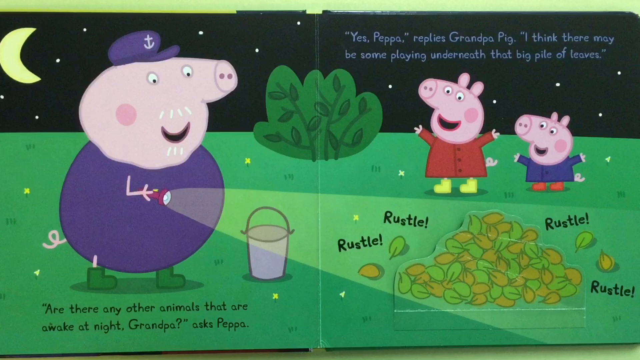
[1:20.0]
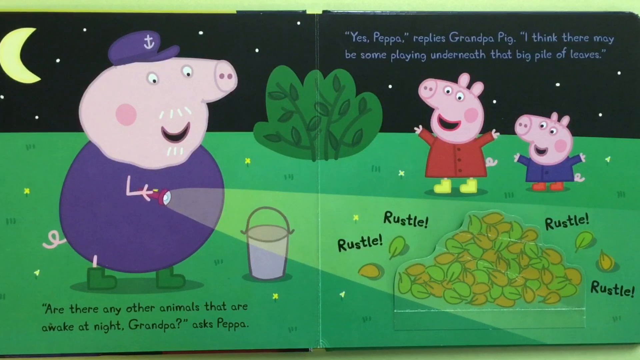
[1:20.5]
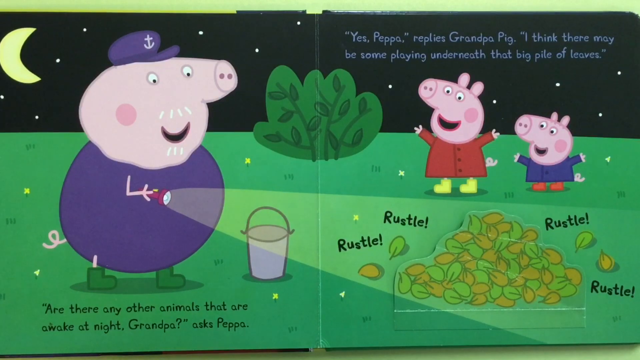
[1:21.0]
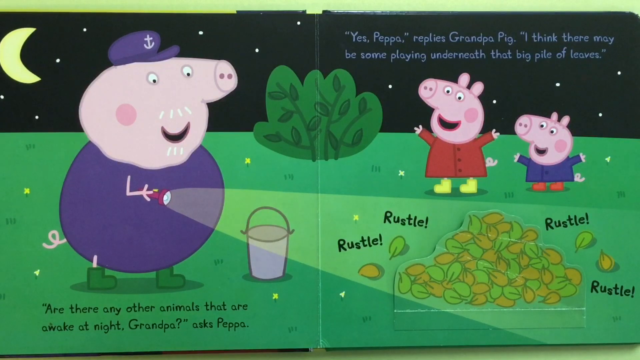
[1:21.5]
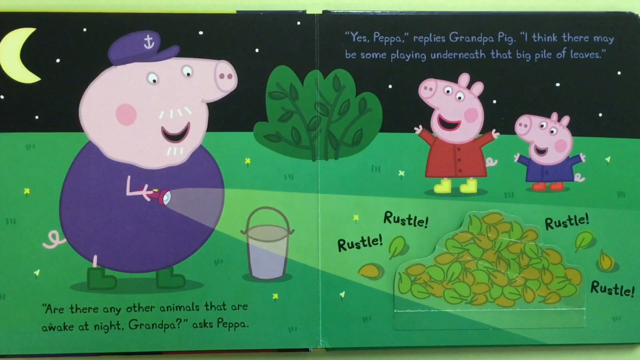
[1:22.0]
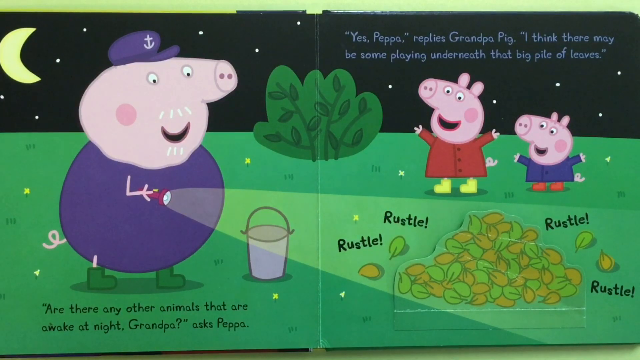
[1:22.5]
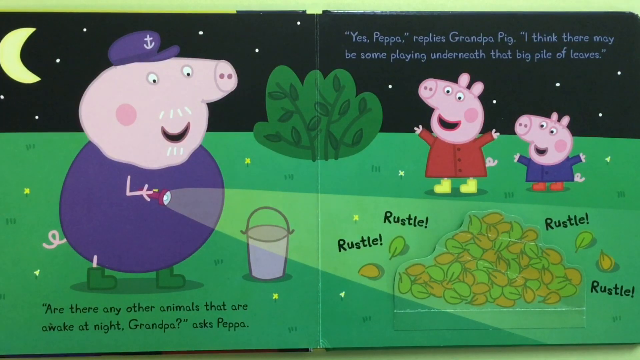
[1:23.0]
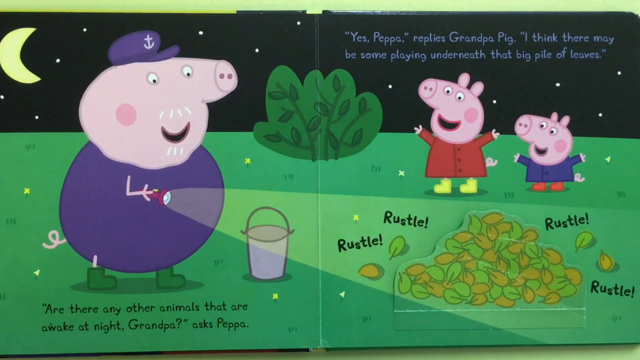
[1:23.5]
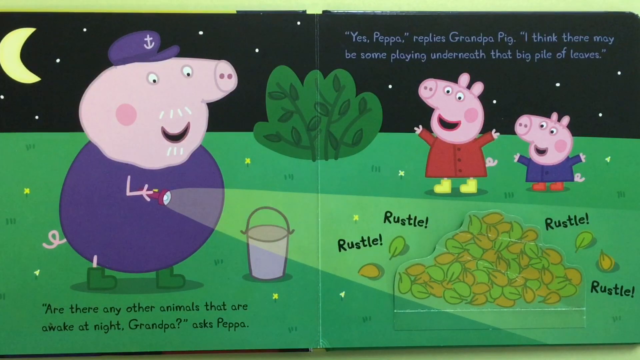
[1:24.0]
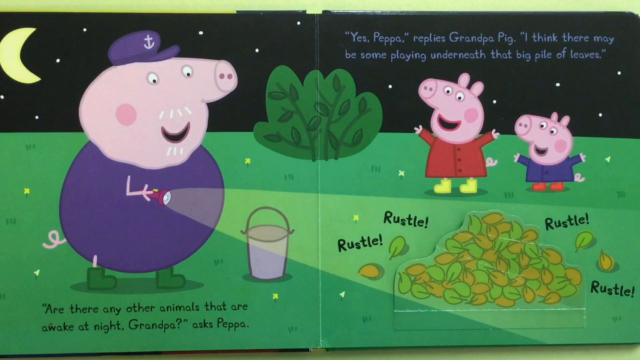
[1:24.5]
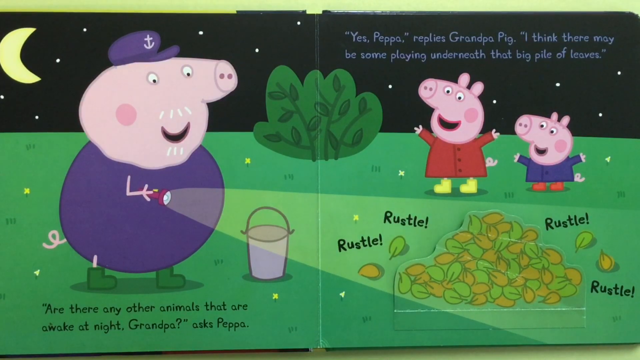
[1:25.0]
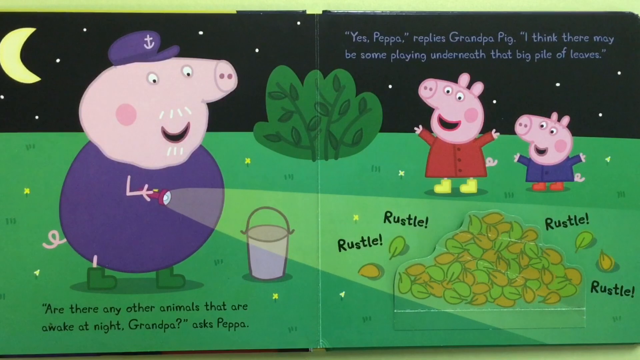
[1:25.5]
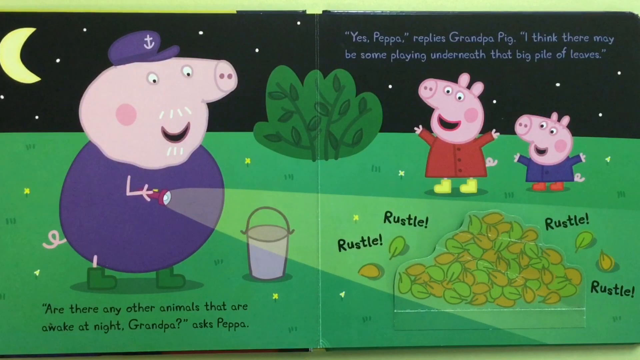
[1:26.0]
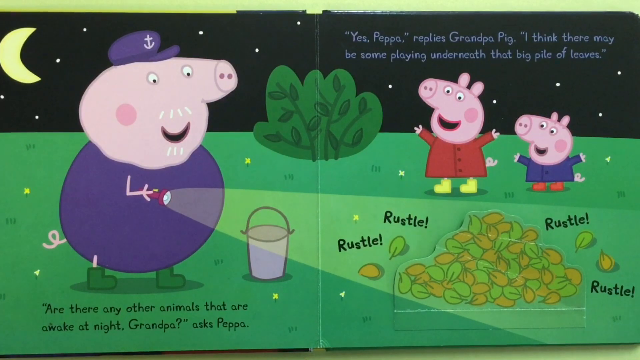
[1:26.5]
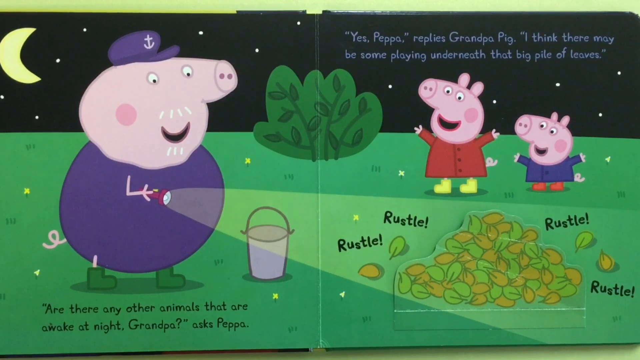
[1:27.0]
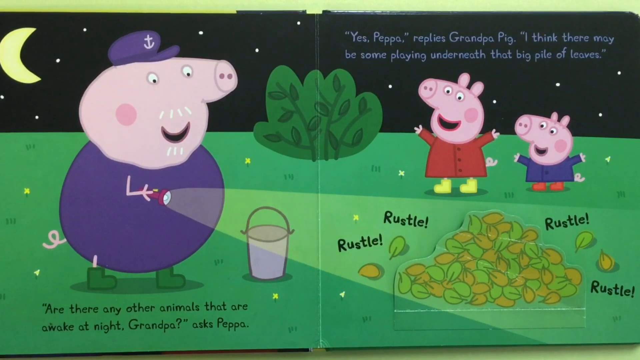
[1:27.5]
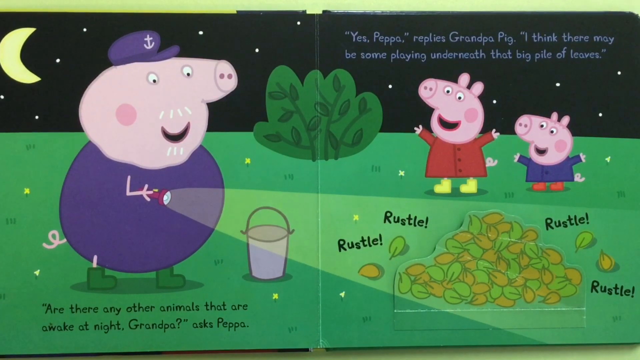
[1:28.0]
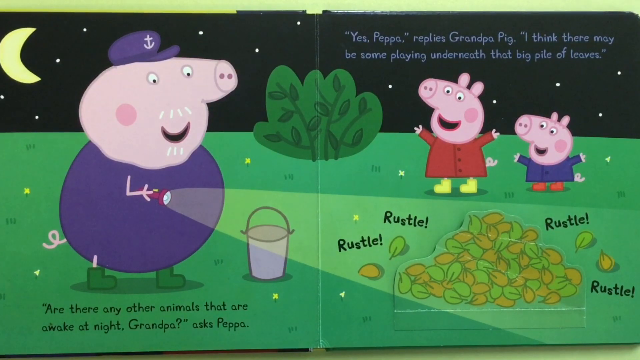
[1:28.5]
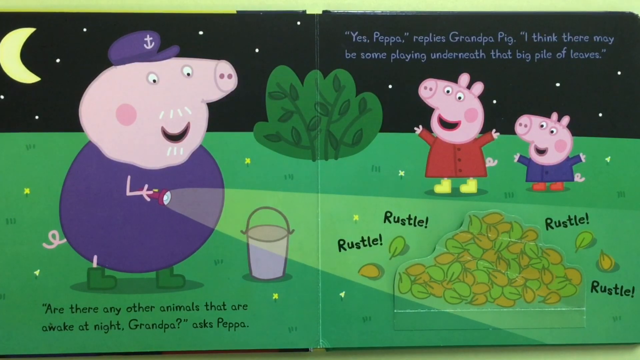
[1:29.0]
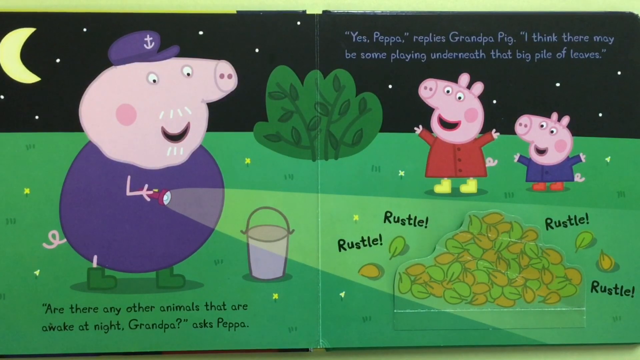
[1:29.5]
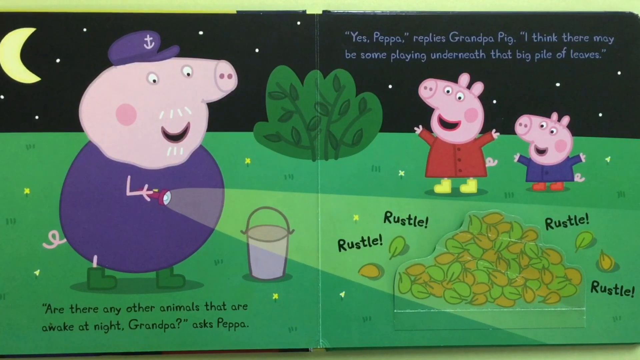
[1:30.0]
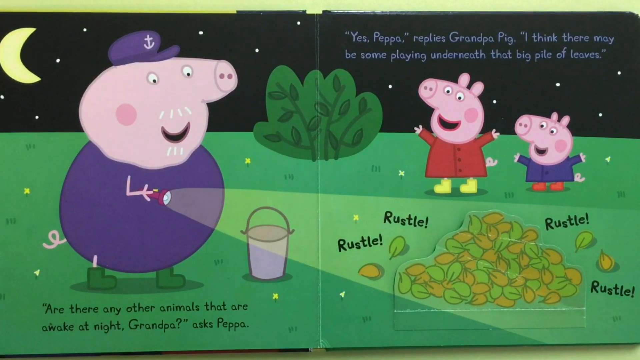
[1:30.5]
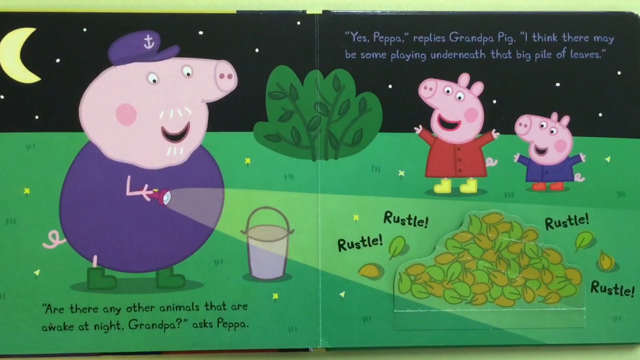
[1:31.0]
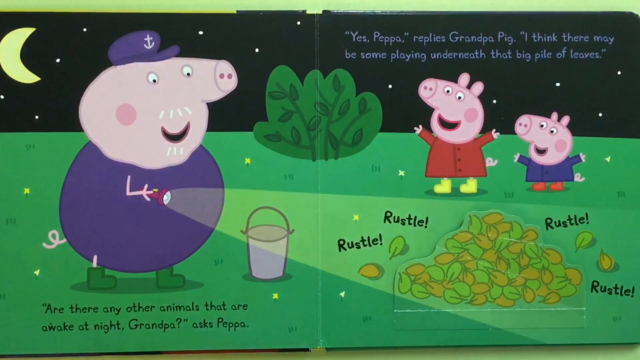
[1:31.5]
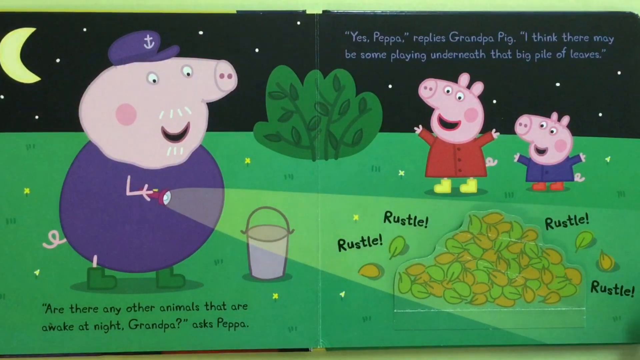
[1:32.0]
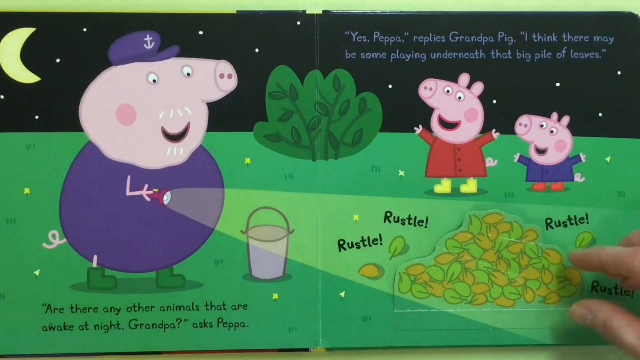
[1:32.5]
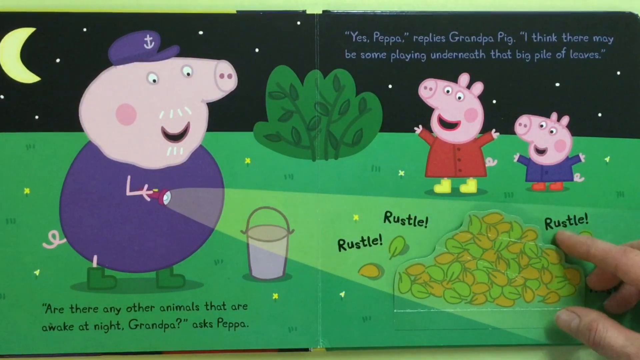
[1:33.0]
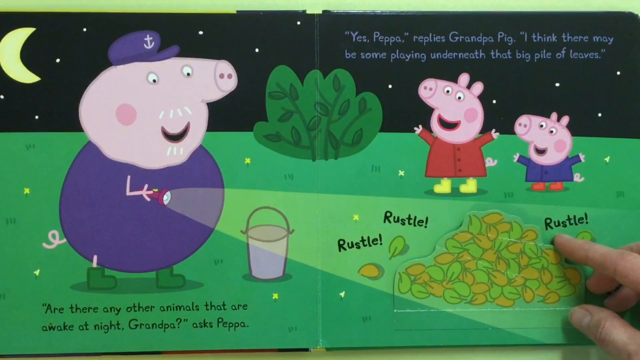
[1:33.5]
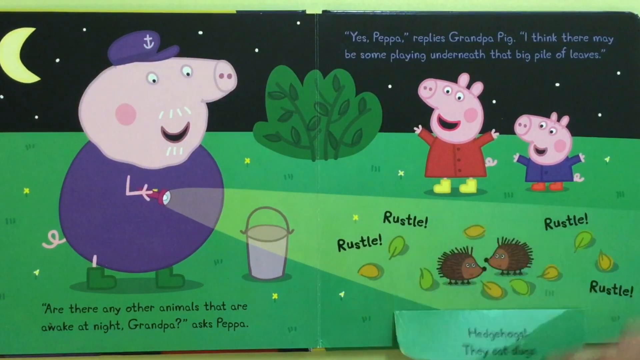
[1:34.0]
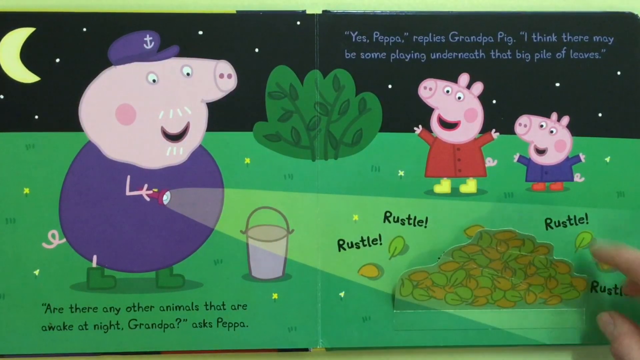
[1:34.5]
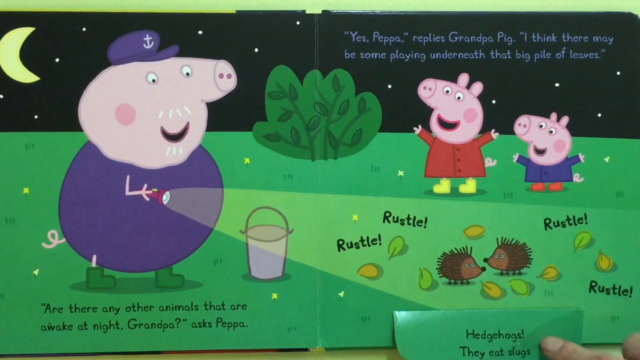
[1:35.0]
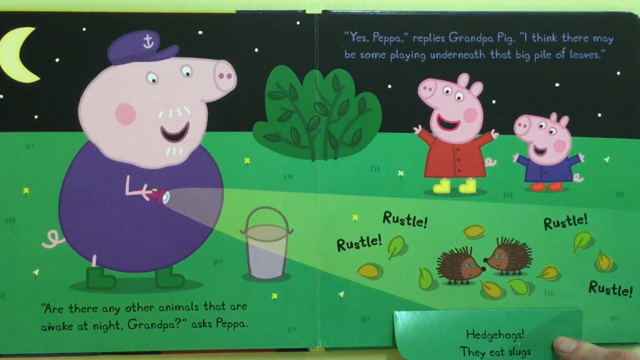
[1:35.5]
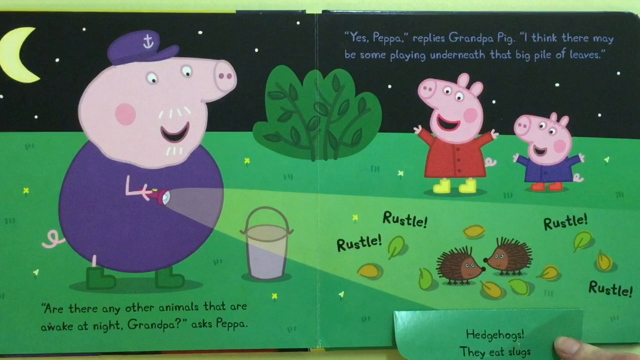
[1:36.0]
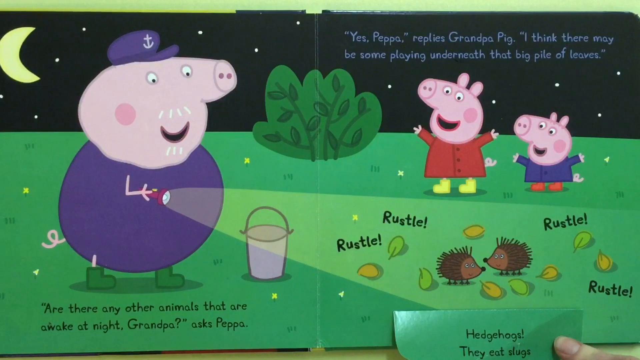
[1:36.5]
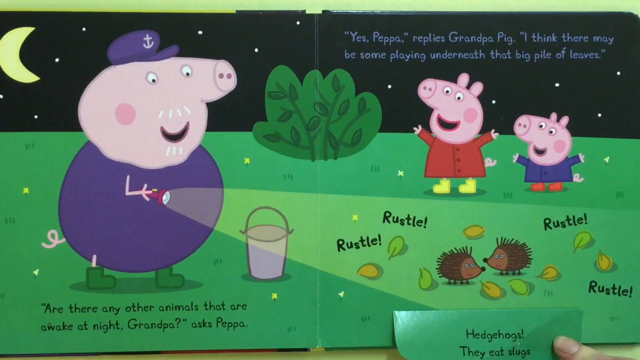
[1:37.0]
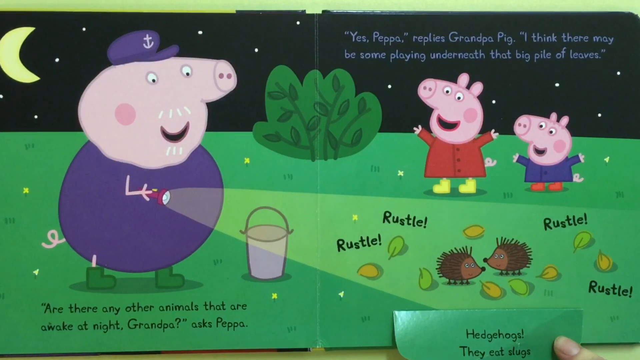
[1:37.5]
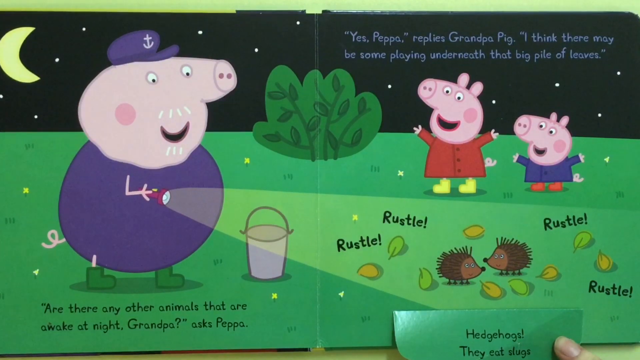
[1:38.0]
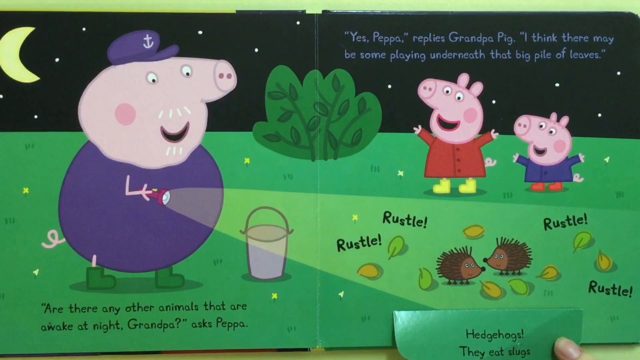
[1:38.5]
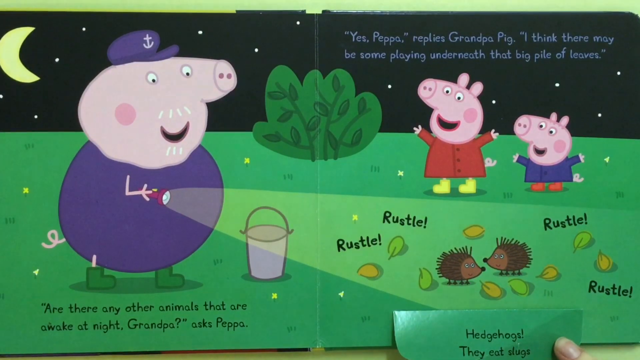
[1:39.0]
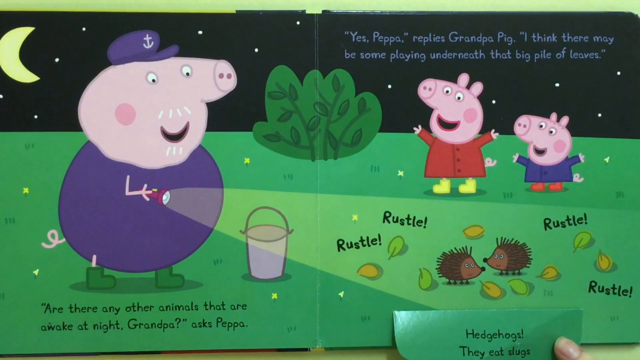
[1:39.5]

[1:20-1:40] Another page of the interactive lift-the-flap book Peppa Pig, Night Creatures, reads: "Yes, Peppa, replies Grandpa Pig. I think there may be some". It is night. Grandpa Pig, in a purple suit, purple hat and green boots, shines his flashlight on some leaves. Little Peppa Pig, in a red dress and yellow boots, has her arms extended and is excited, and her little brother, in a purple outfit and red boots, is excited too.